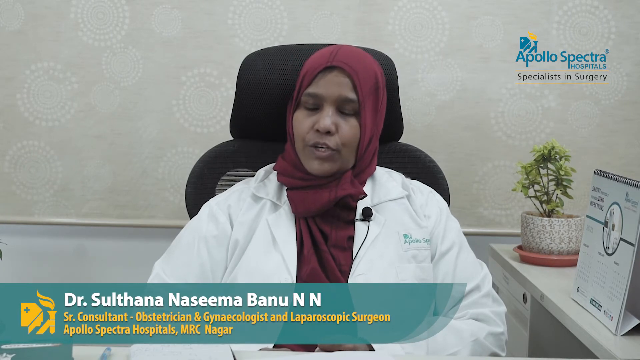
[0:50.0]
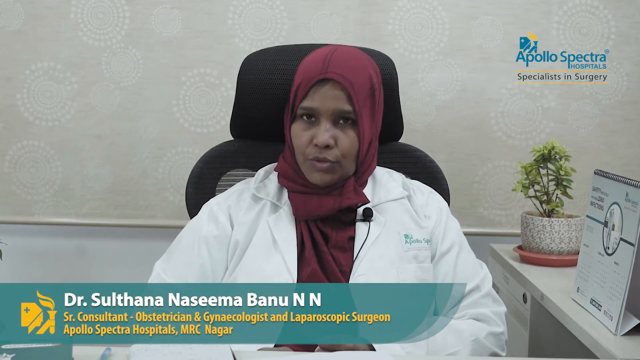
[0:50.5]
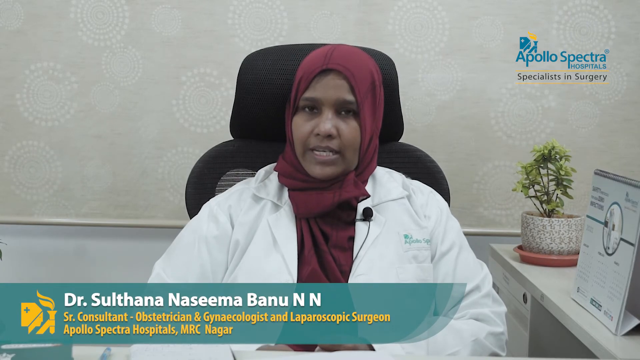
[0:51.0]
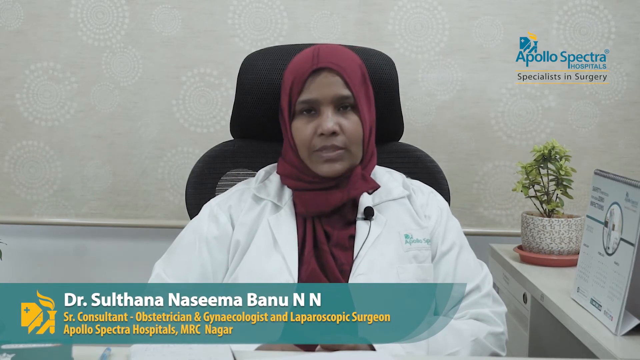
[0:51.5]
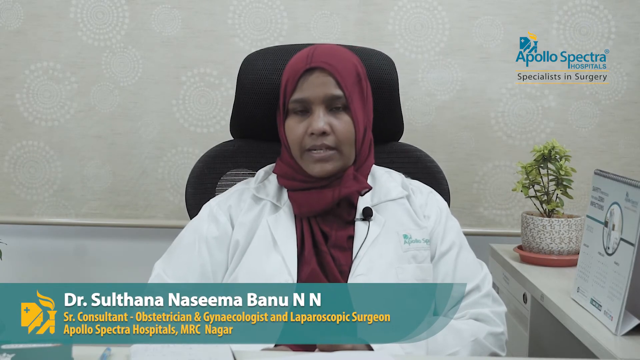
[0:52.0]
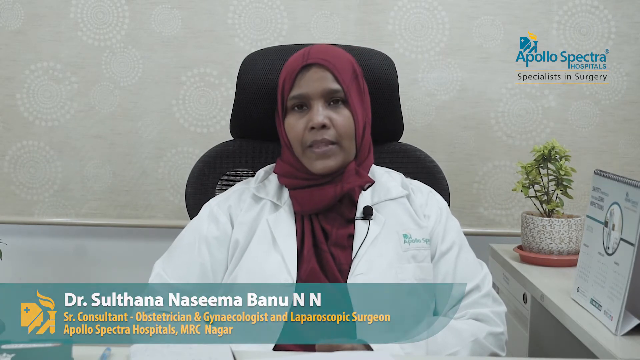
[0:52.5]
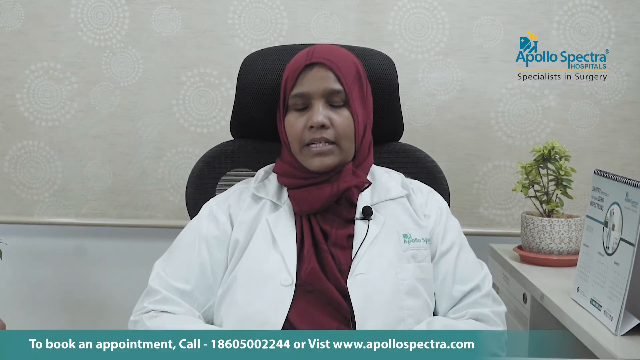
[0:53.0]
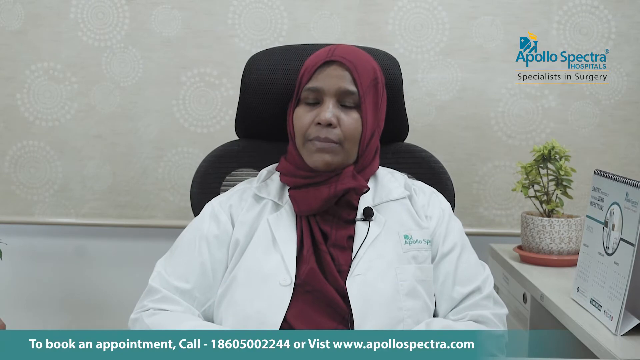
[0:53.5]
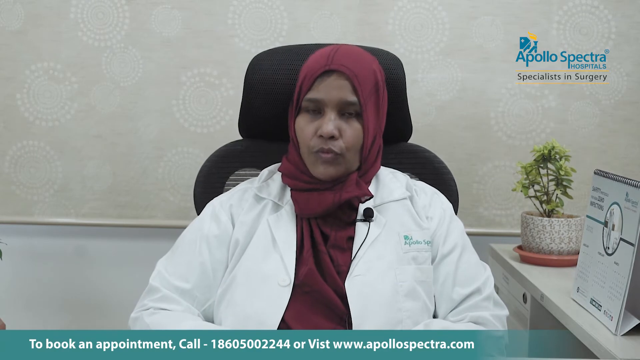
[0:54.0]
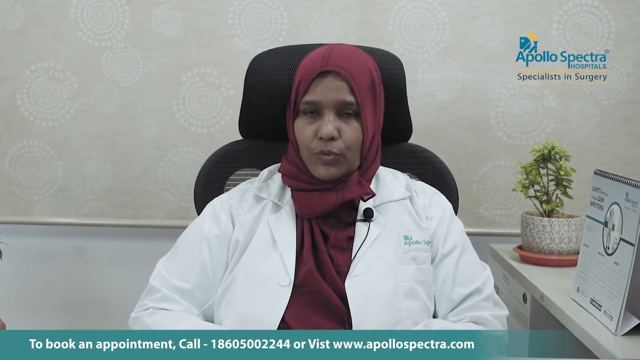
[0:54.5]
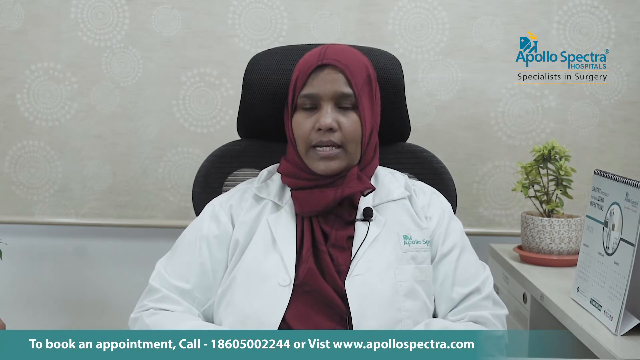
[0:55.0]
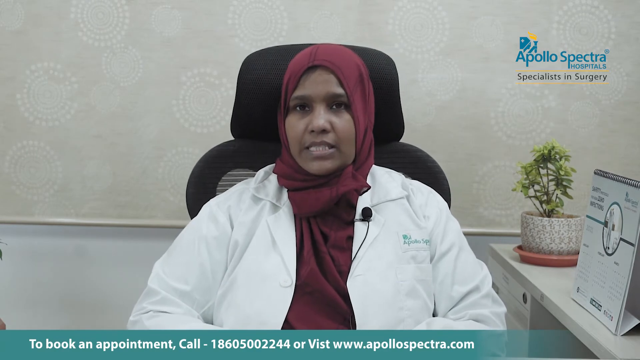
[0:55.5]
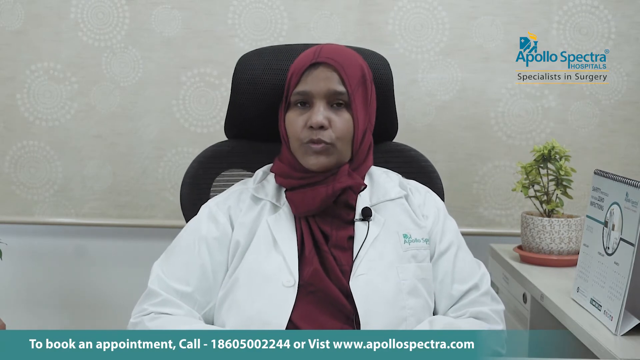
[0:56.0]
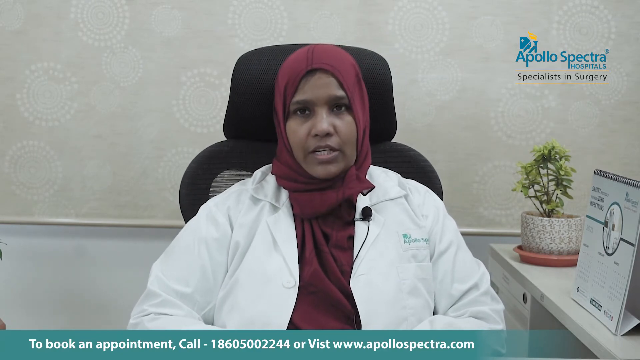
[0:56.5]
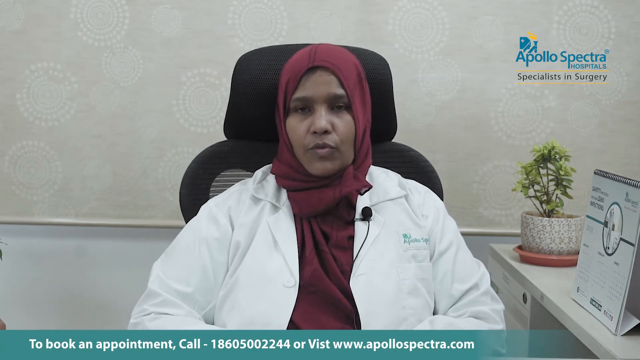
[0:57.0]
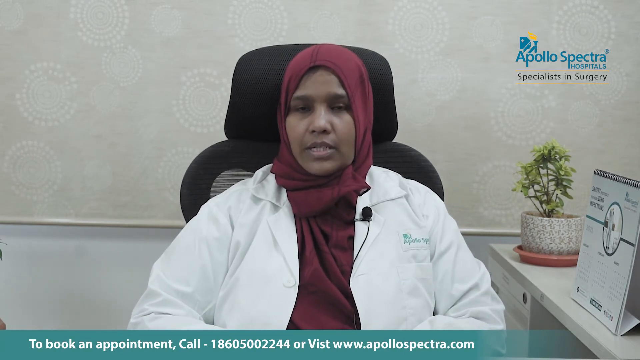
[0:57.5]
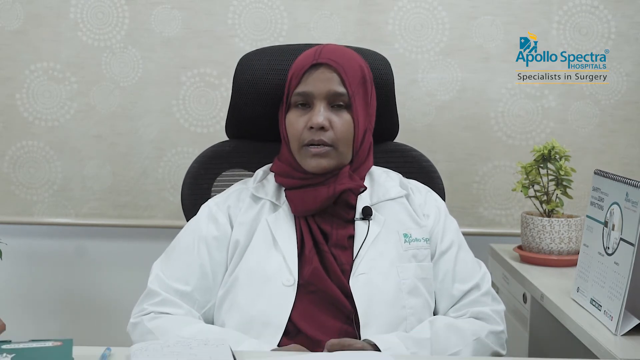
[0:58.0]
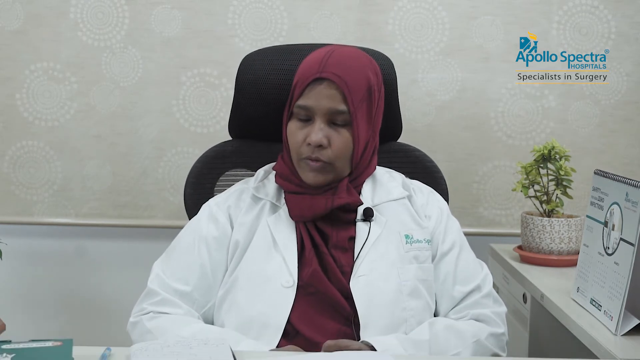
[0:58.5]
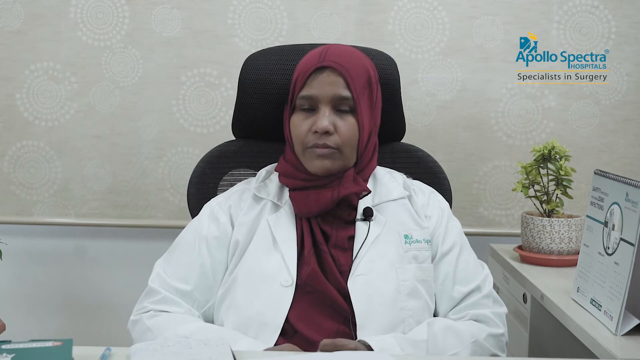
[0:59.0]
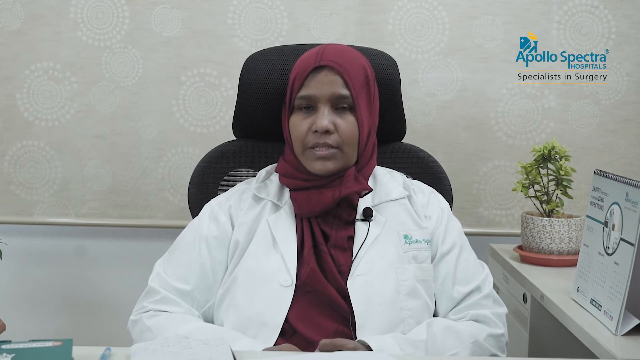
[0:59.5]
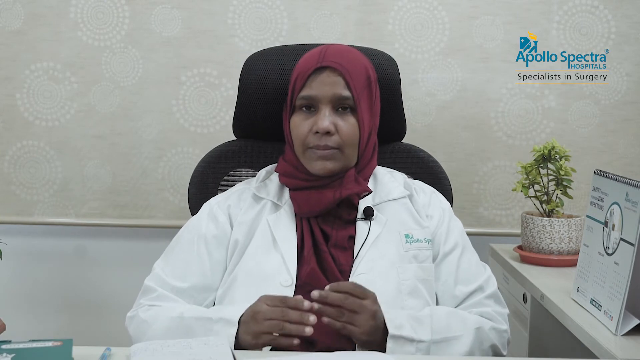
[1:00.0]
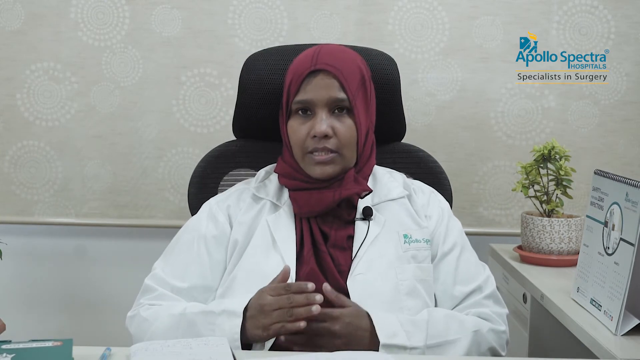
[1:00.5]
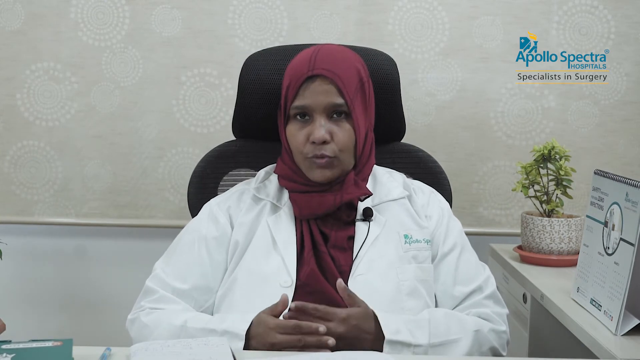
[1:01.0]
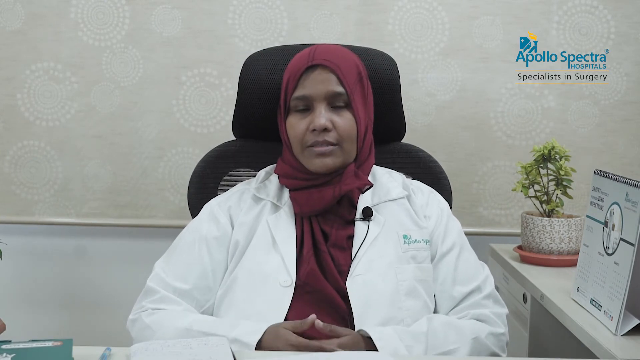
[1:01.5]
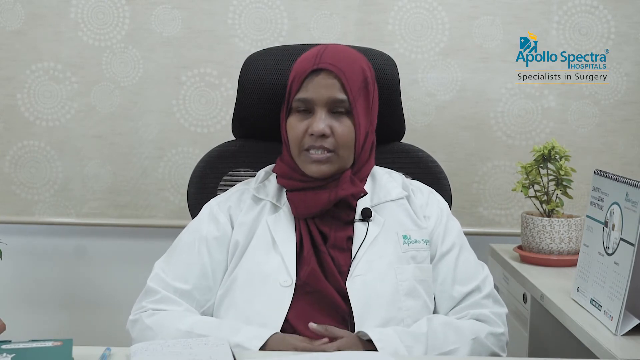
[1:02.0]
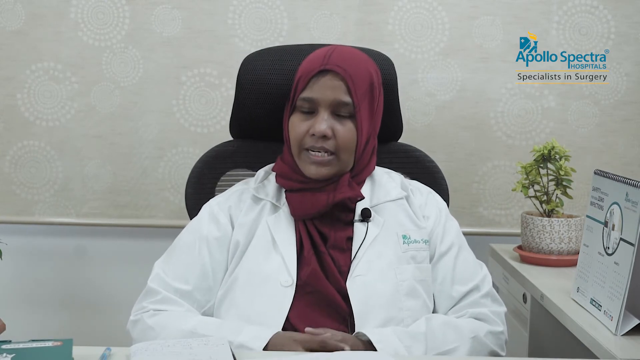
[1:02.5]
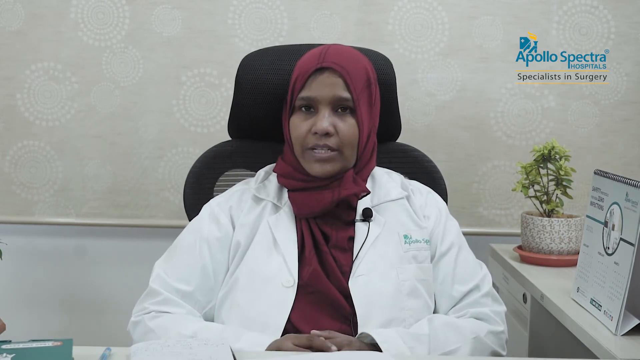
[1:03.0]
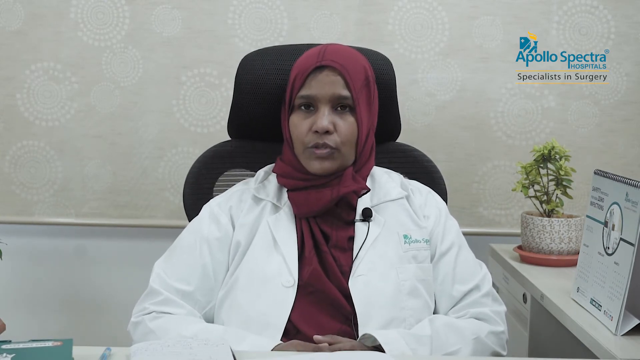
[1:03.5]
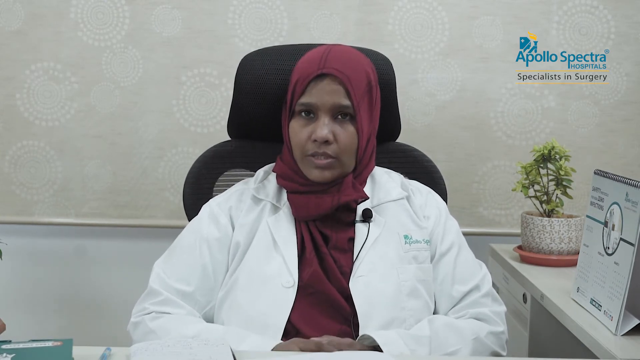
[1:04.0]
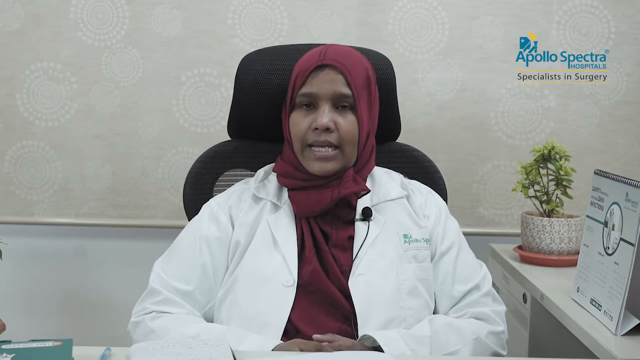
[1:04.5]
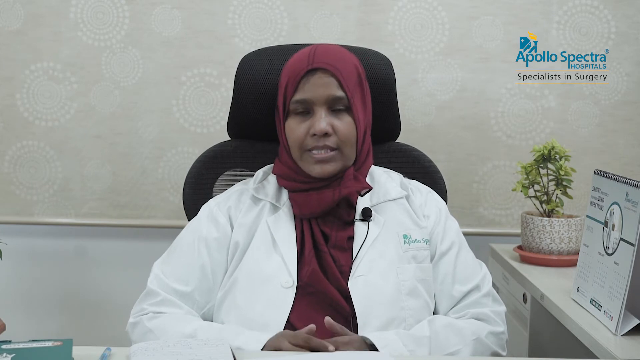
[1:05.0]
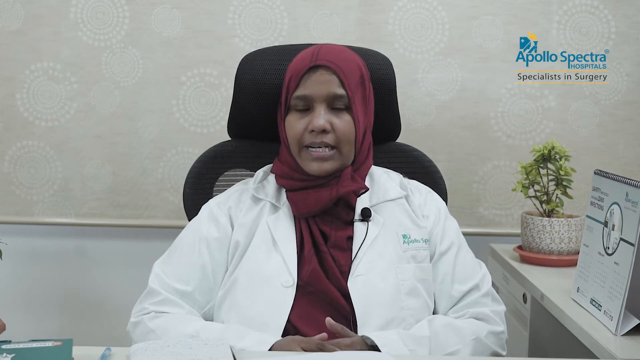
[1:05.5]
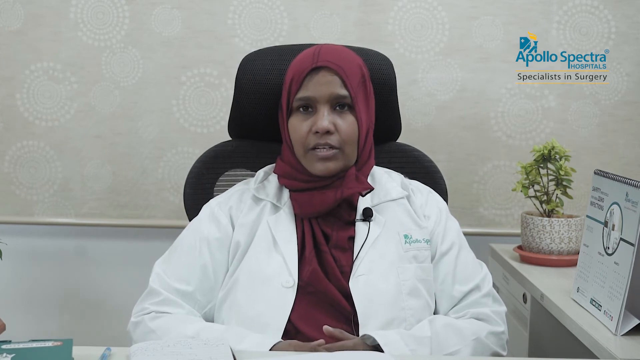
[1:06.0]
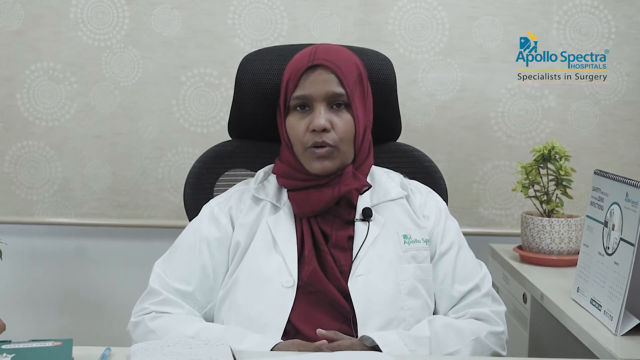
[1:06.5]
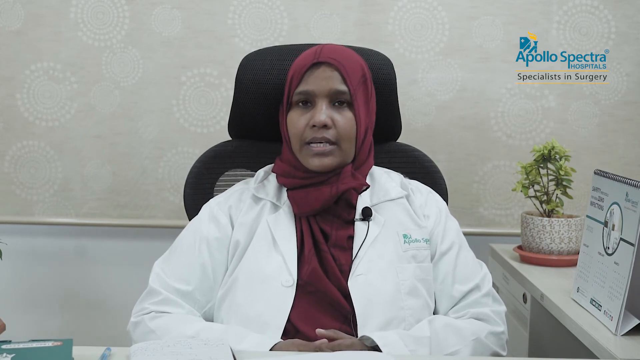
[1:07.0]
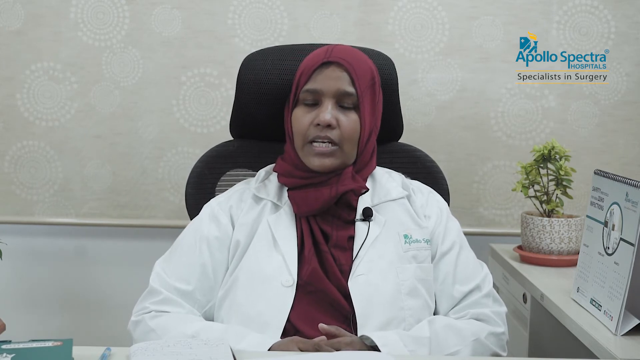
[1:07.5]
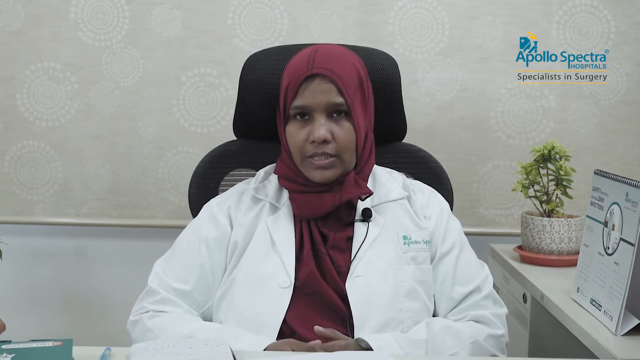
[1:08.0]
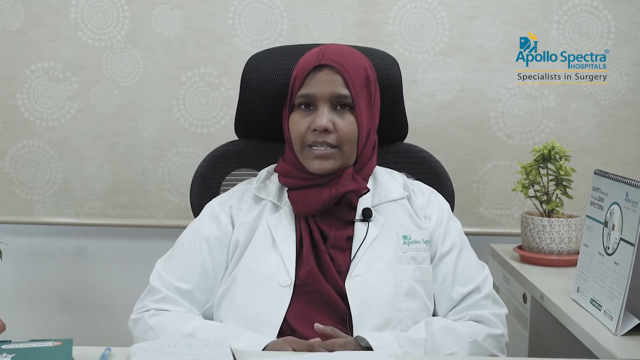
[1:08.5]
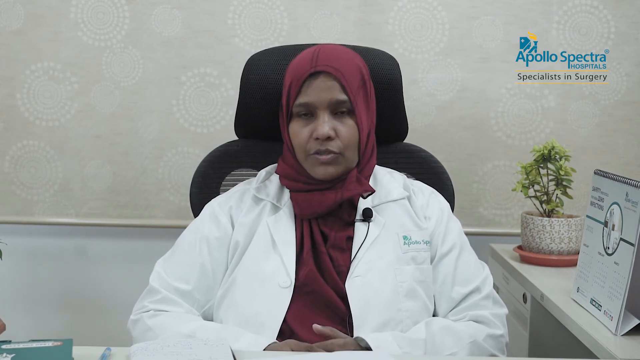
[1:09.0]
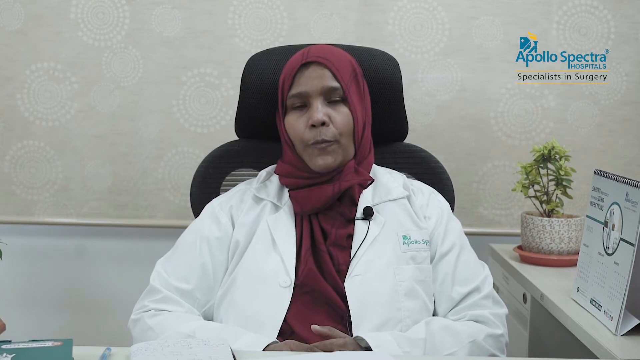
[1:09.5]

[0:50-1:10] Text at the bottom says to book an appointment, call a number or visit ApolloSpectraHospitals.com. The phone number appears to be from another country, such as India, and is not a United States number or area code. The main focus is a woman in a red scarf and a white doctor's coat with a black microphone on it. She appears to be in an office, since she is sitting beside a desk. On the desk is a small plant in a white and black vase on top of a tan-colored coaster, and some type of chart whose text is hard to make out. The words "Apollo Spectra Hospitals" are at the top right, with "specialist in surgery" underneath. She is sitting in a black chair in front of a wall with a wallpaper pattern on the top half and white paint on the bottom.